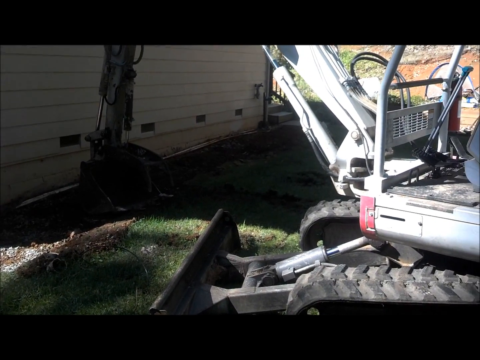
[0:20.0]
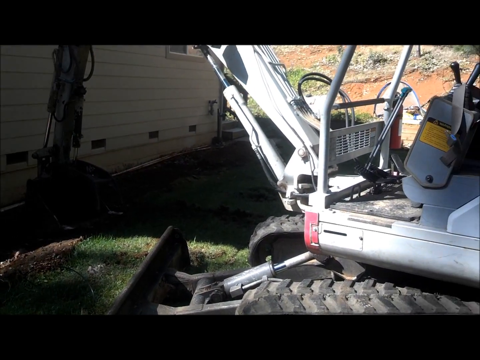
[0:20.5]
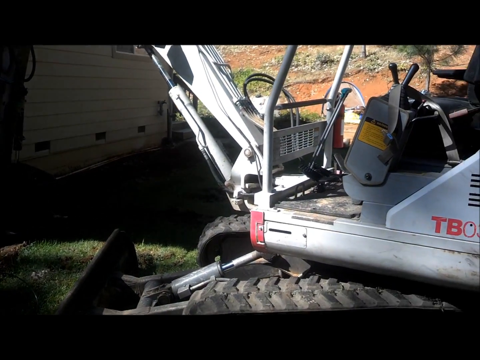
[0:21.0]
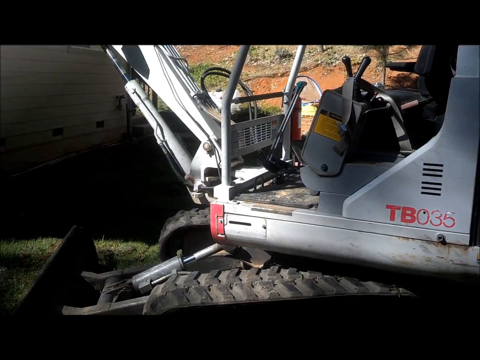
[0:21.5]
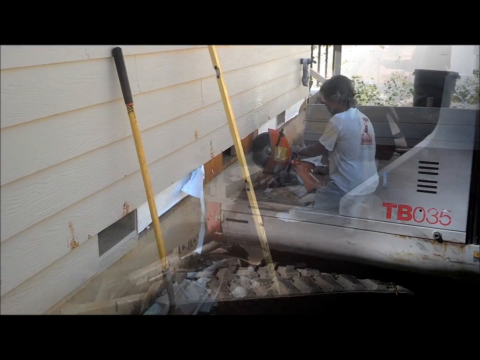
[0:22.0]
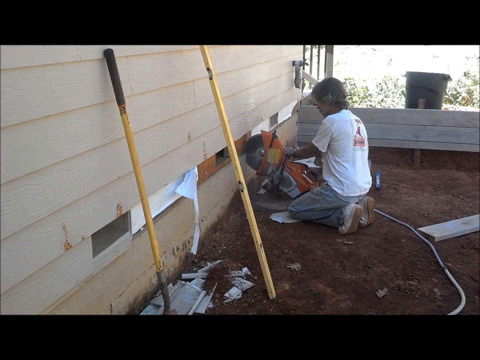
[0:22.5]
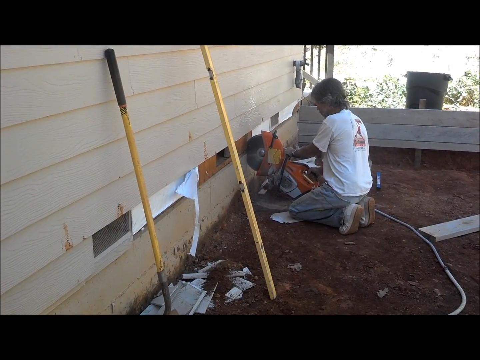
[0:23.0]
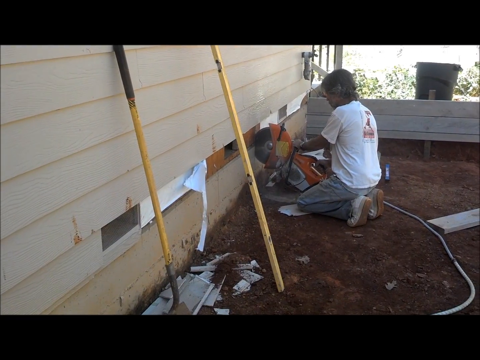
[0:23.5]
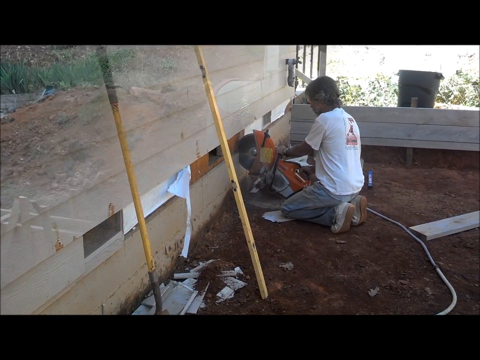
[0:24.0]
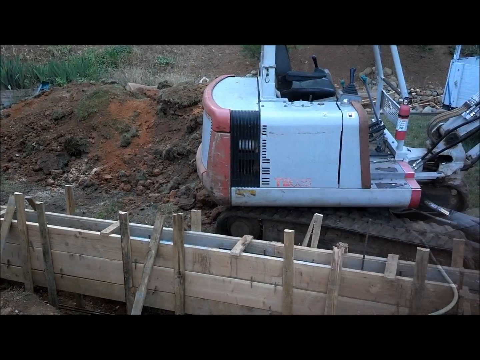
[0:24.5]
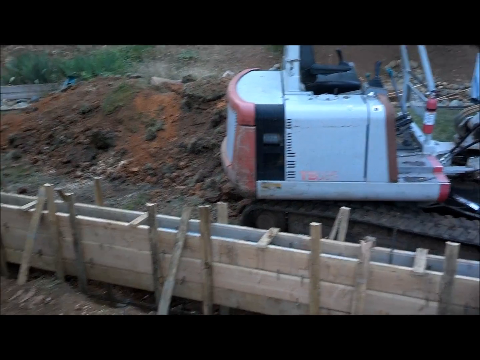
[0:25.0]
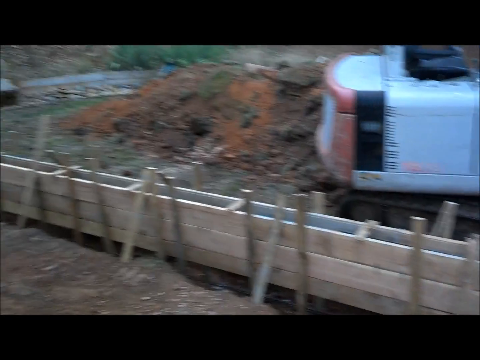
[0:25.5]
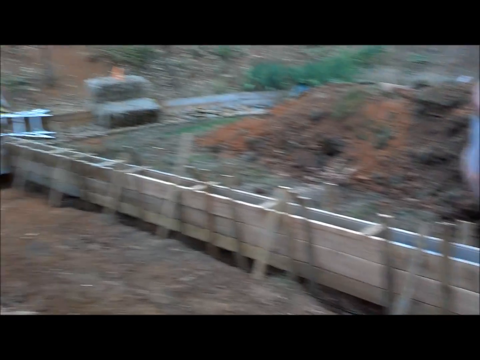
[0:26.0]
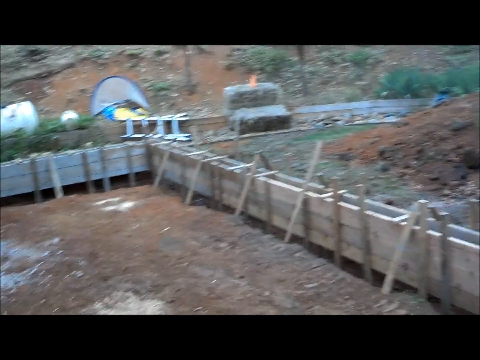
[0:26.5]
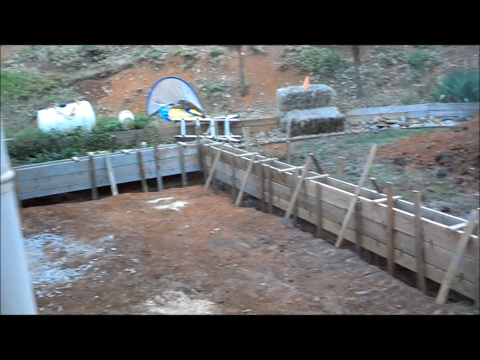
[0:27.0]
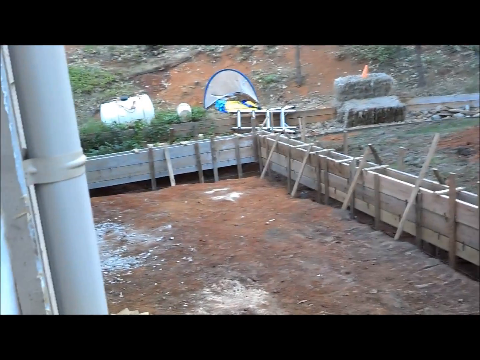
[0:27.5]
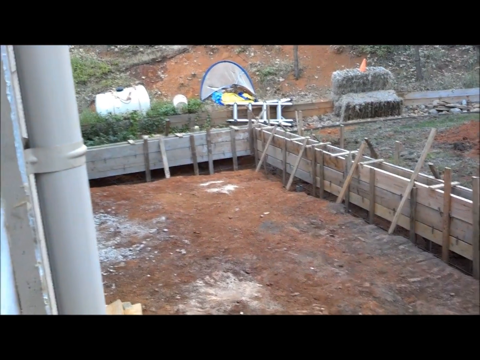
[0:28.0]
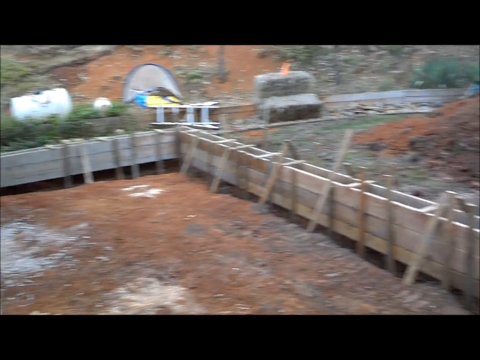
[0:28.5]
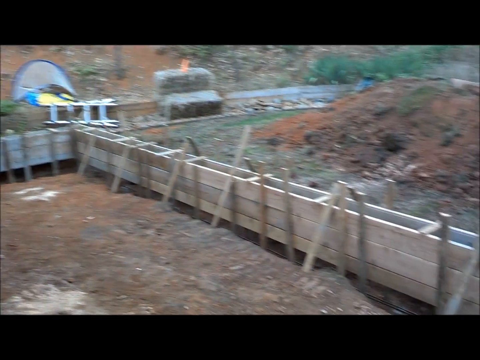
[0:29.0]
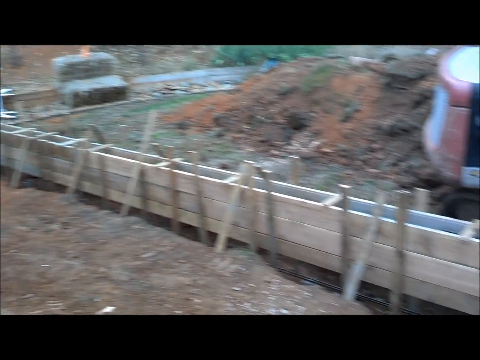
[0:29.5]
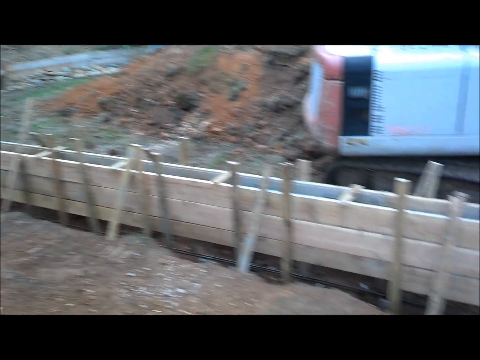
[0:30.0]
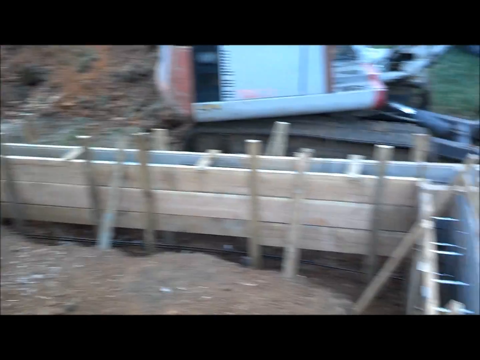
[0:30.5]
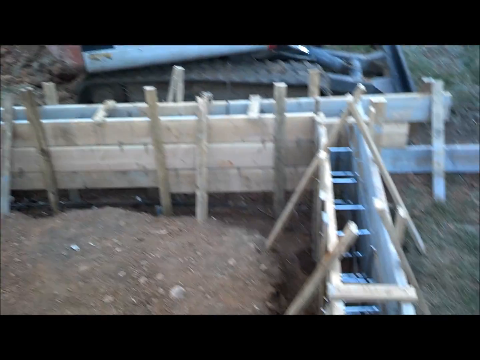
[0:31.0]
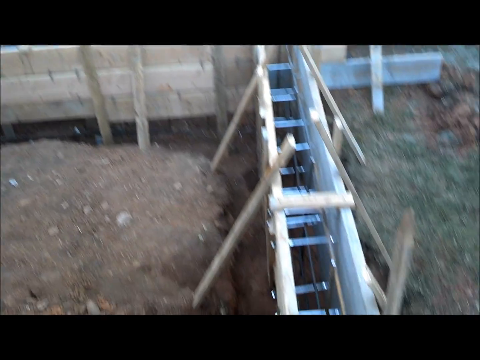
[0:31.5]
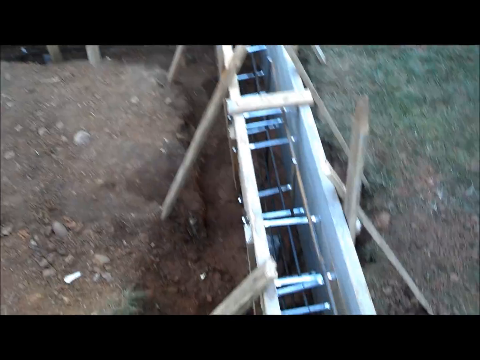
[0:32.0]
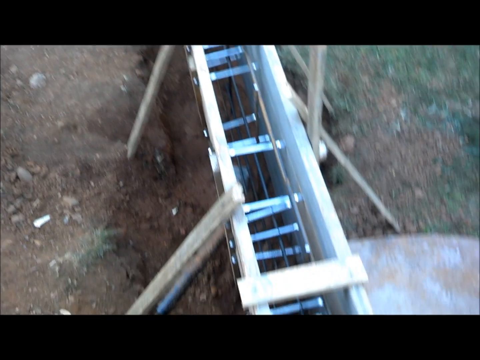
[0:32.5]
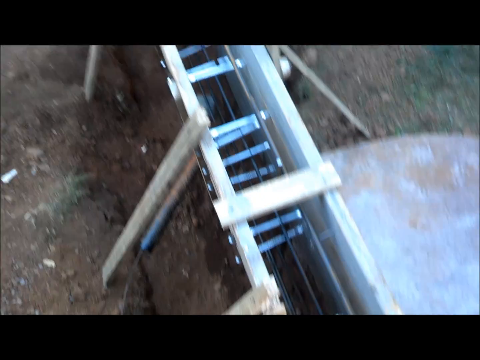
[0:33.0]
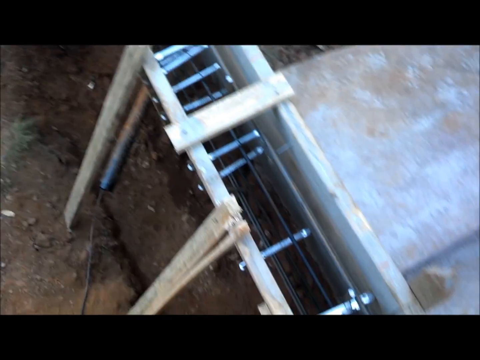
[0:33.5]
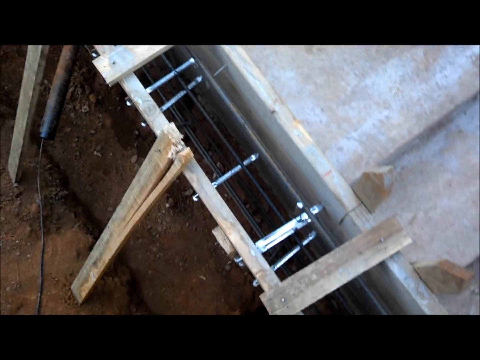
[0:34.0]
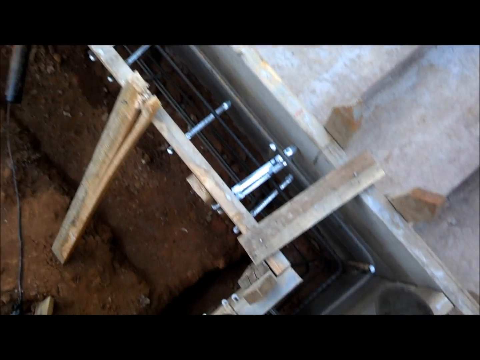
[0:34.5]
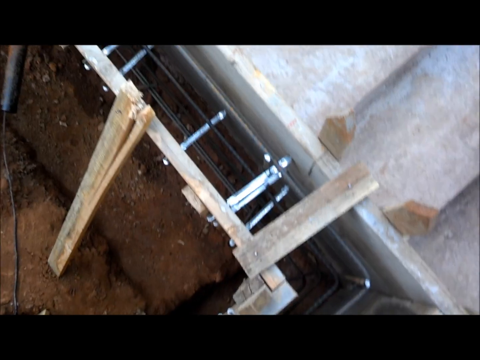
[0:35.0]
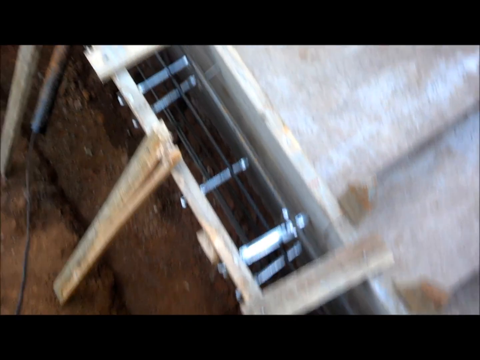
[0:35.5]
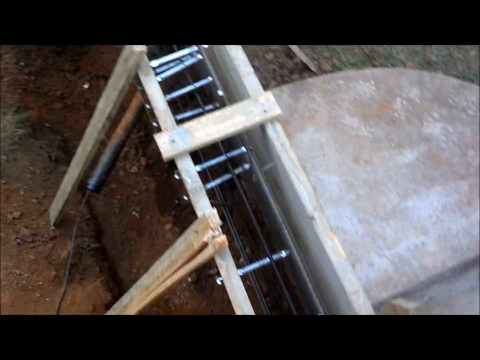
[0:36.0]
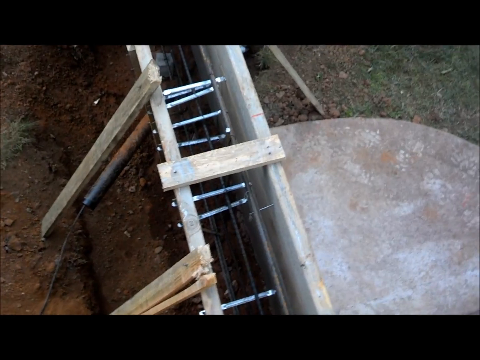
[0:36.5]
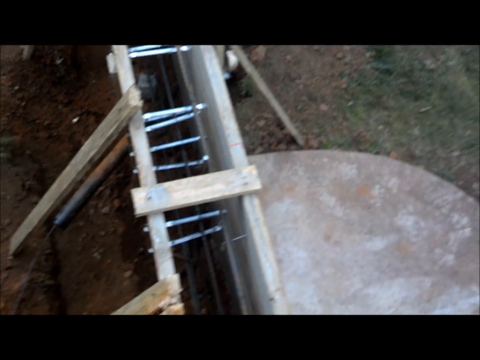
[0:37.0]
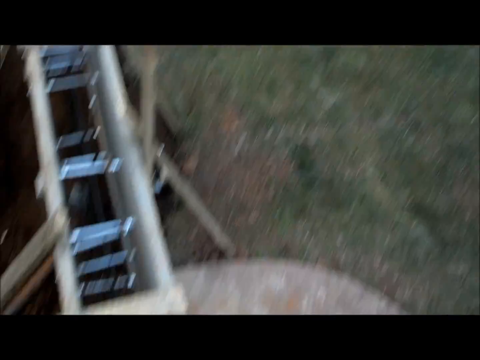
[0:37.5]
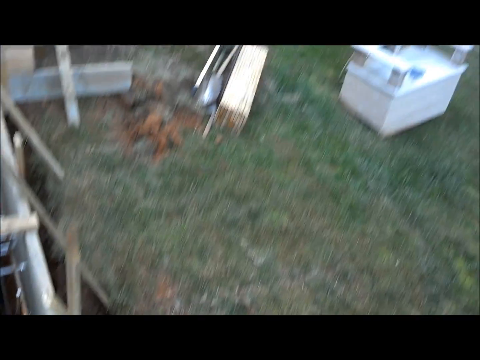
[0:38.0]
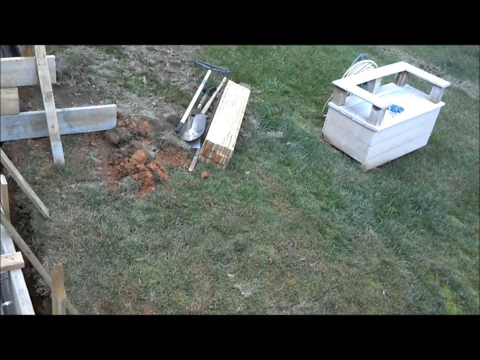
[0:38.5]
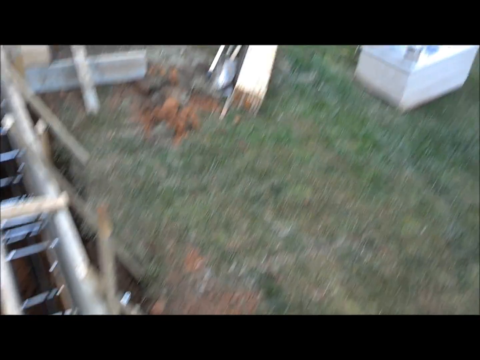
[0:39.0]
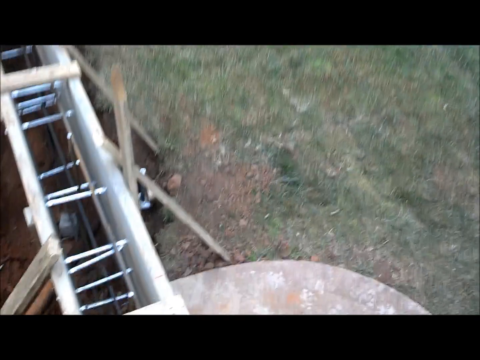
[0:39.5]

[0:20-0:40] Machinery is on site, and it looks like concrete is going to be added to expand the house's square footage. Cinder blocks outline where the subfloor will be added. A small white machine, apparently an excavator of unidentified brand, has dug the dirt out, apparently about two feet deep. Wooden sticks run along the cinder blocks, apparently to keep them level, and there are metal bolts or rebar. A white man in a white shirt and dirty black jeans is working while someone else films while standing on the cinder blocks. The man uses some sort of saw to cut some of the cinder blocks, apparently to size or shape them so everything fits together.